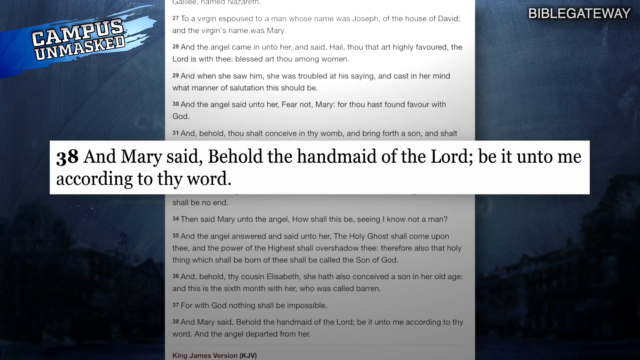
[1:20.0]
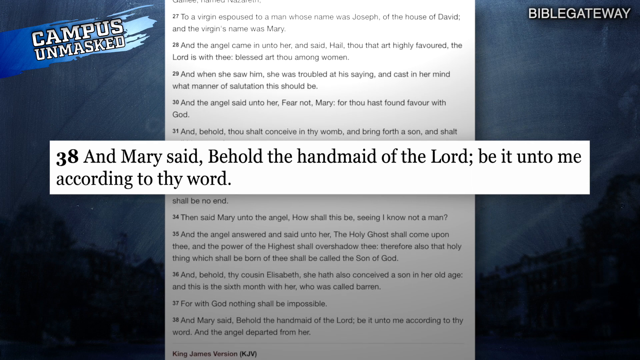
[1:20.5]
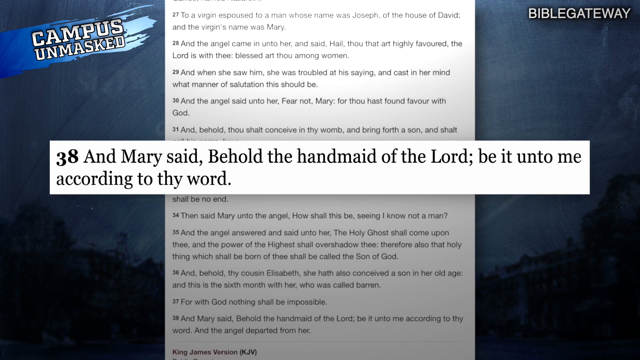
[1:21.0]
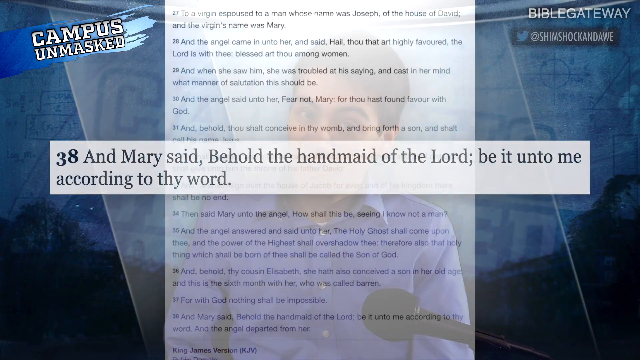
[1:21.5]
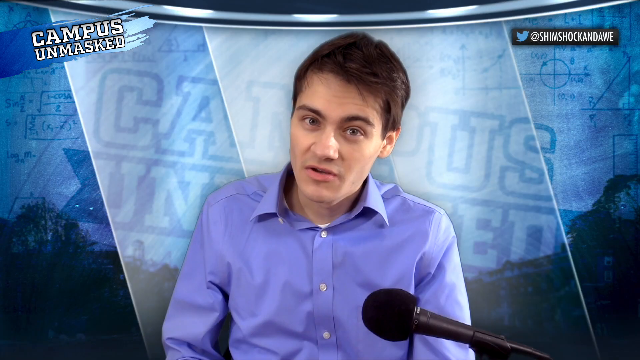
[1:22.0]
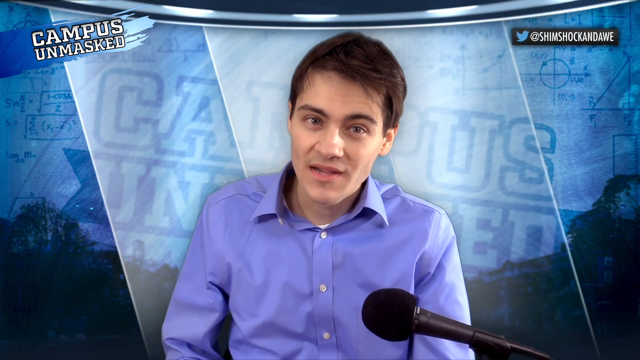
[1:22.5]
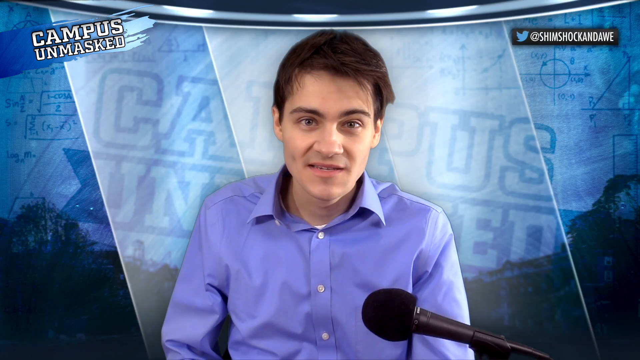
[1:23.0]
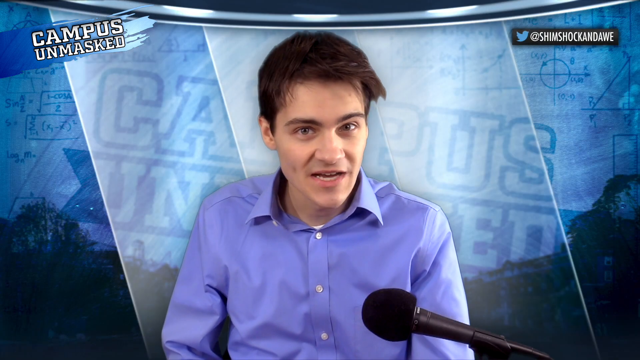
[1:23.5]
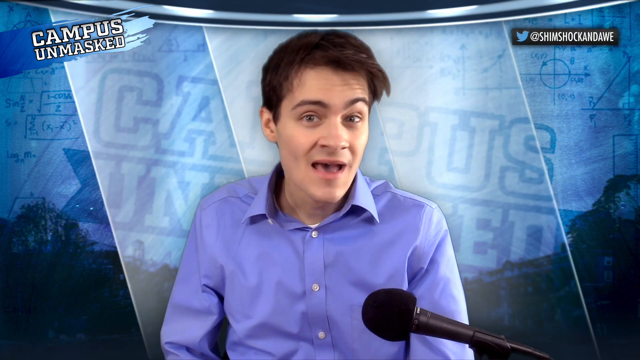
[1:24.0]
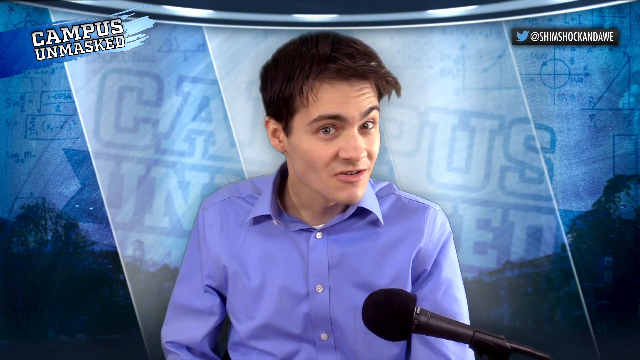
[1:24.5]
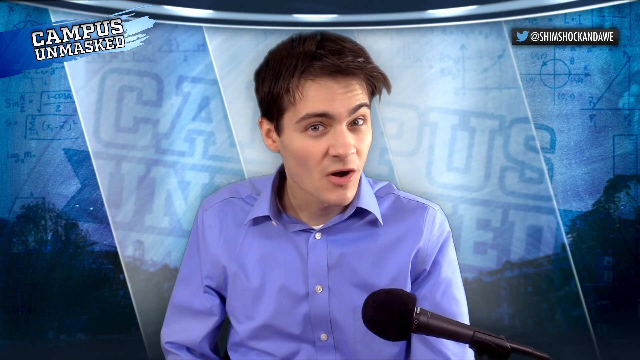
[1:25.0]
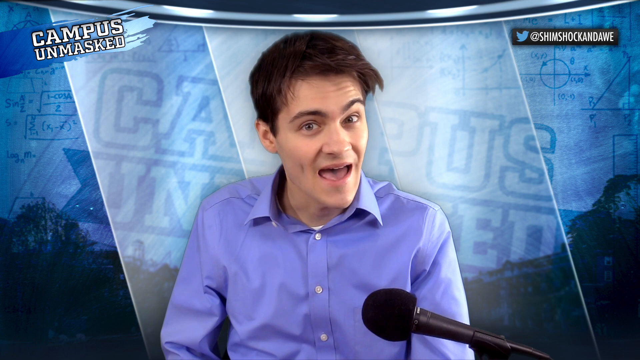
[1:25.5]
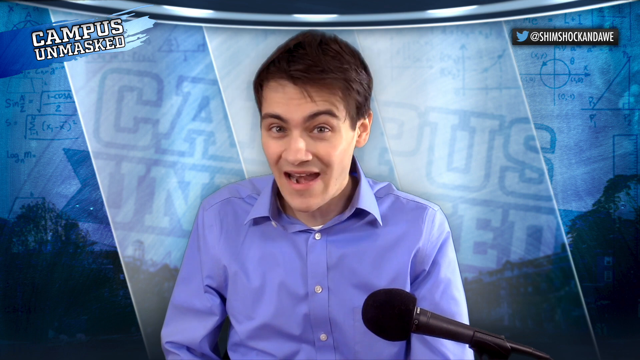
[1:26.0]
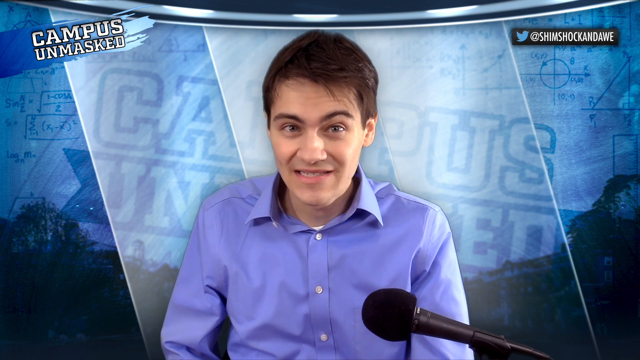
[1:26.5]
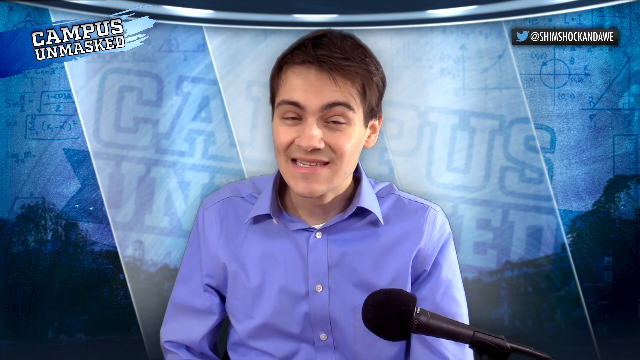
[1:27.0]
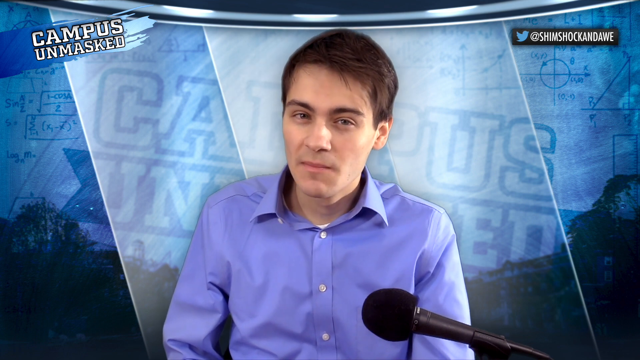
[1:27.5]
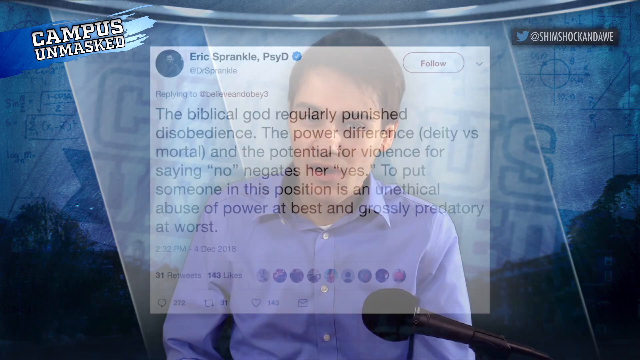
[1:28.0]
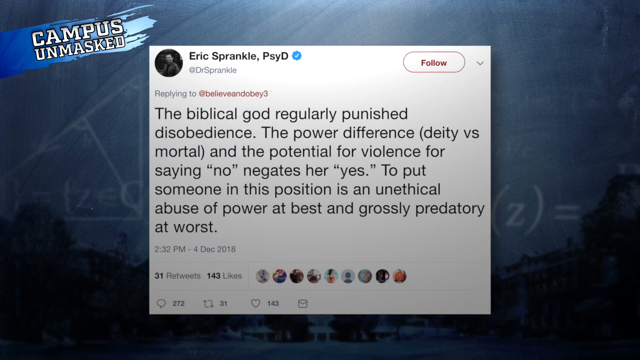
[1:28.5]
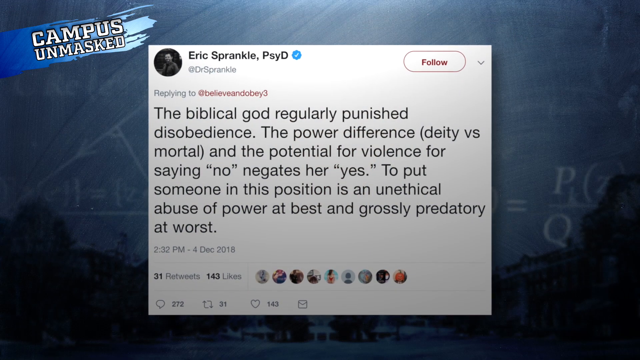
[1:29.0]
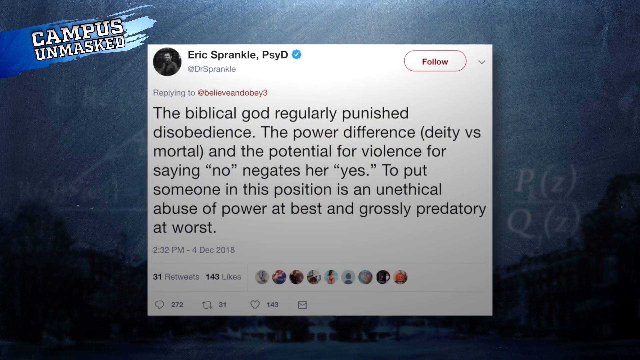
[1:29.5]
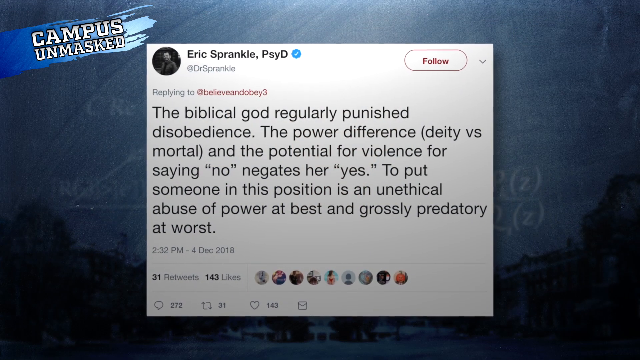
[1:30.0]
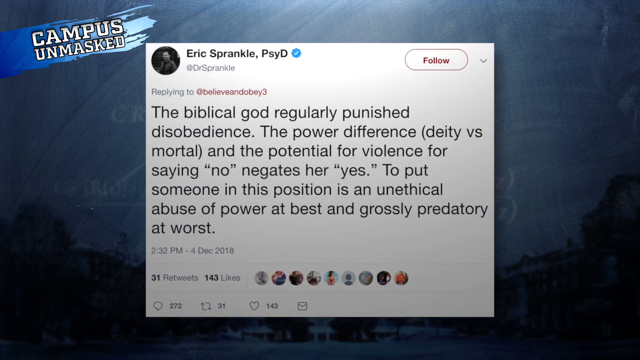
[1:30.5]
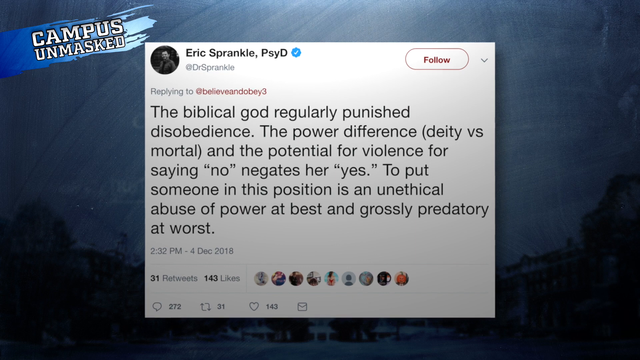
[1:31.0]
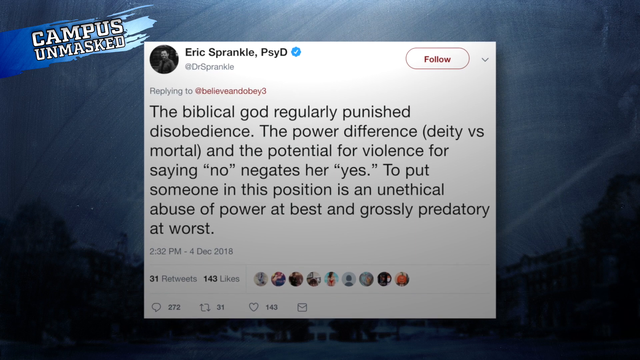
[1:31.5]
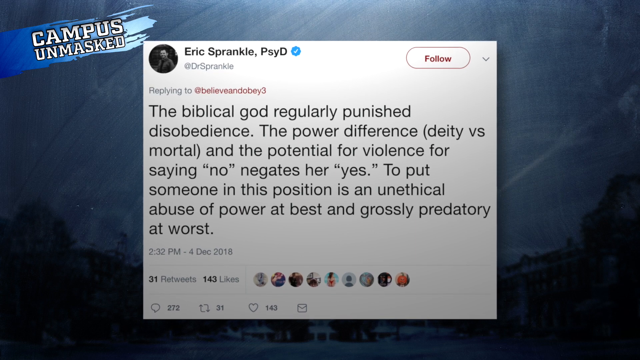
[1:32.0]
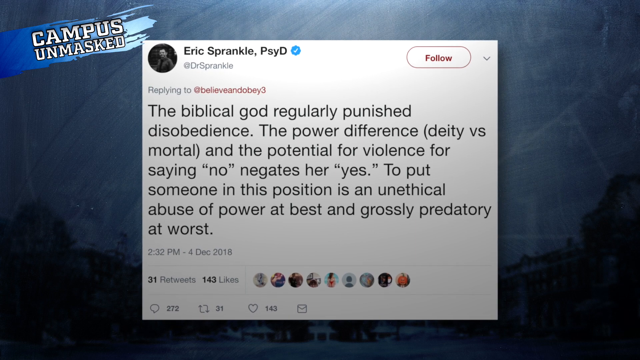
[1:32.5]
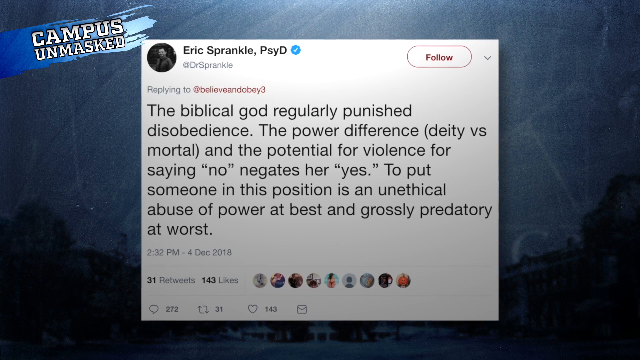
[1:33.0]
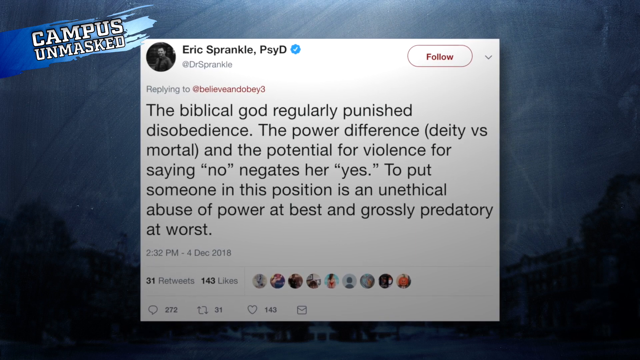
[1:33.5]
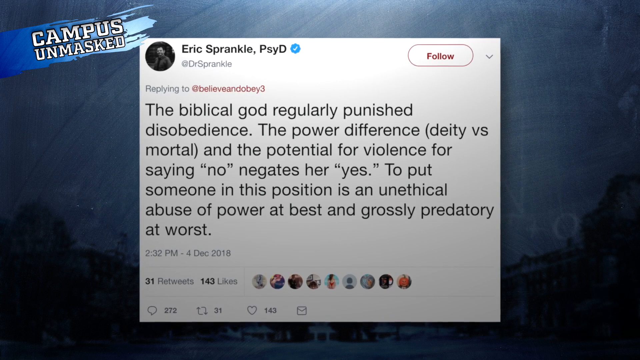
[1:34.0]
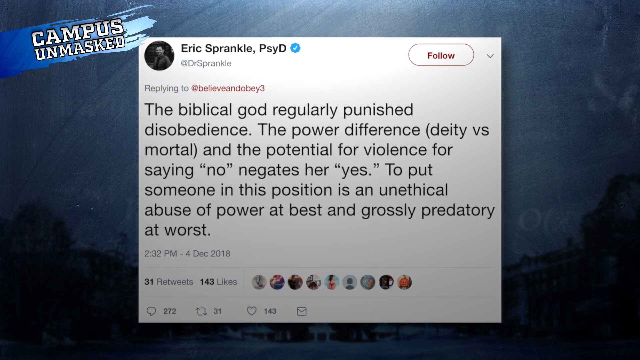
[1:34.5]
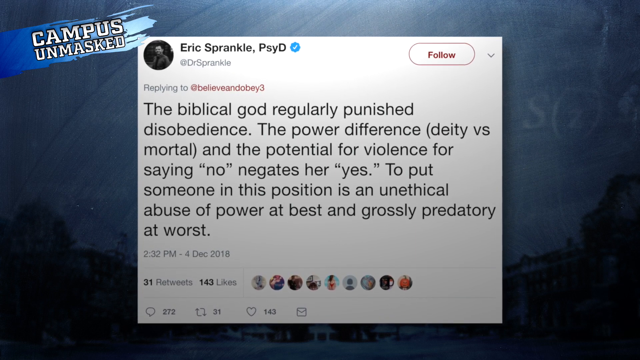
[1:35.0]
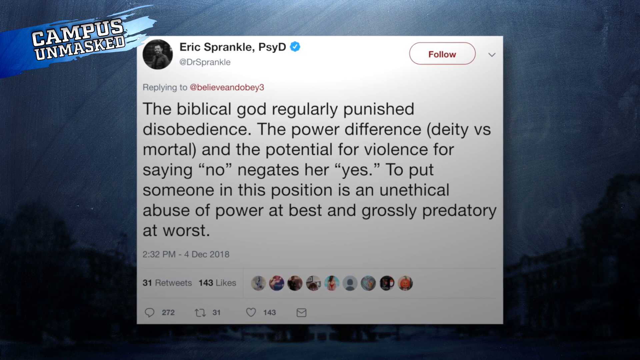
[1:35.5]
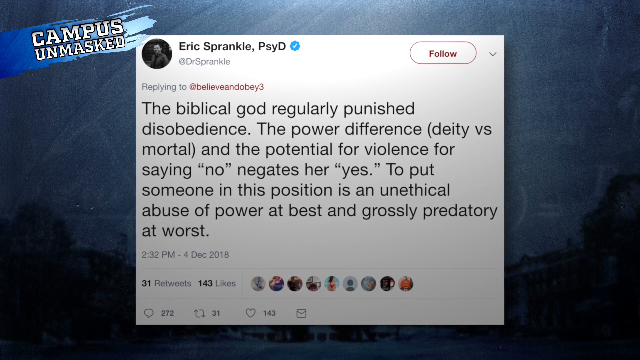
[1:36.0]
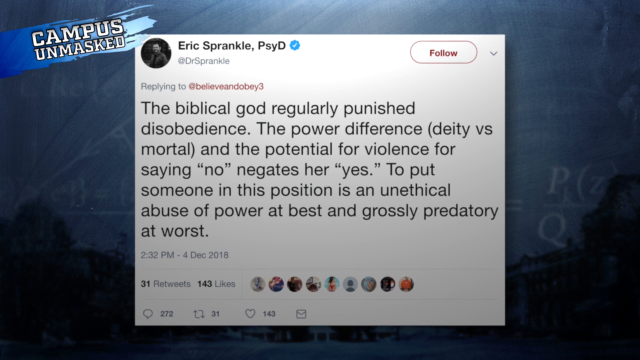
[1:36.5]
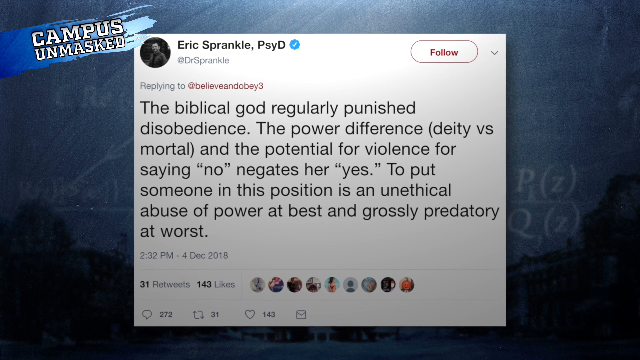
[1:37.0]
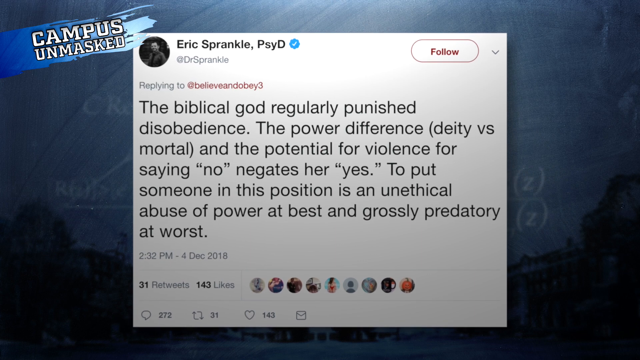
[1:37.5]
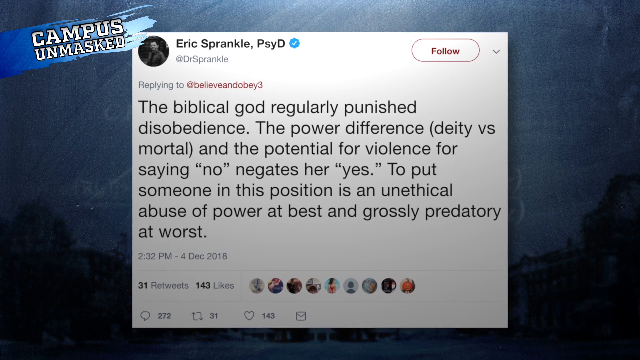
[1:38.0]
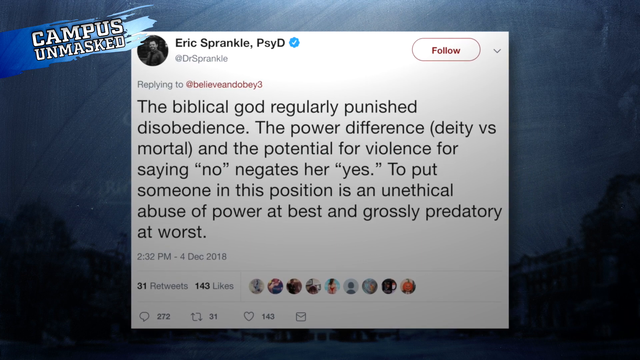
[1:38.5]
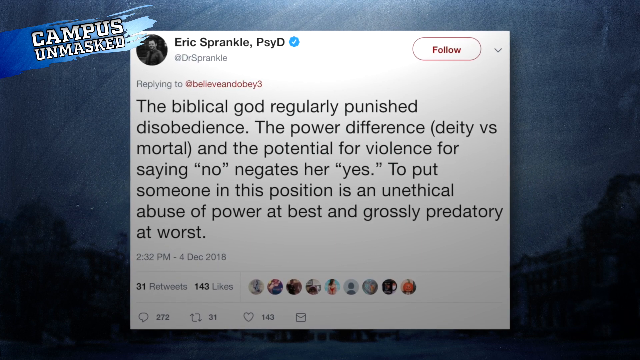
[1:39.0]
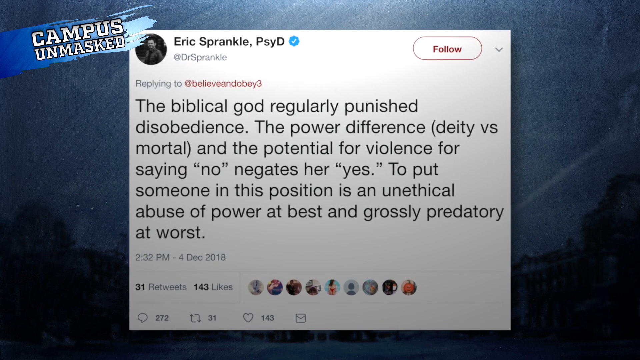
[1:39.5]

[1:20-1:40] Verse 38 of one of the Gospels is shown, reading "And Mary said, Behold the handmaid of the Lord, be it unto me according to thy word." The young man in the blue dress shirt seems very upset. A follow-up tweet from Eric Sprangle, who sent the original tweet, is then shown: "The biblical God regularly punished disobedience. The power difference, deity versus mortal, and the potential for violence for saying no, negates her yes. To put someone in this position is an unethical abuse of power at best, and grossly predatory at worst."